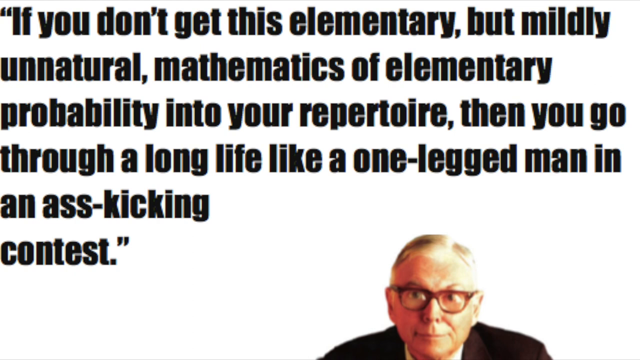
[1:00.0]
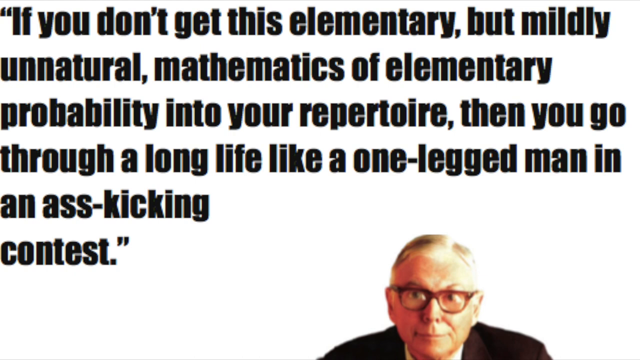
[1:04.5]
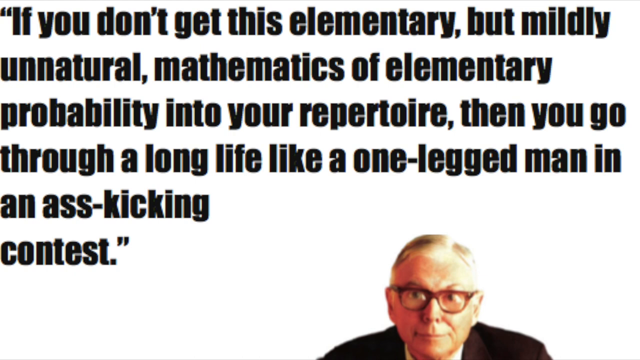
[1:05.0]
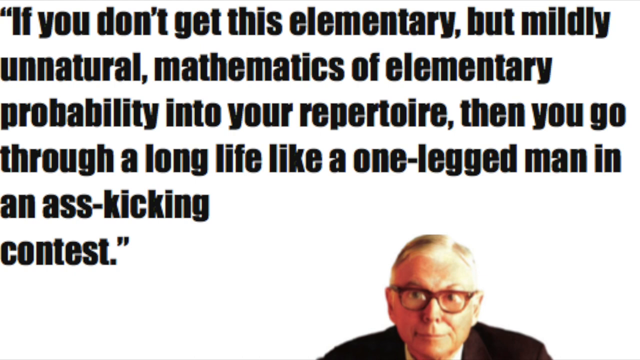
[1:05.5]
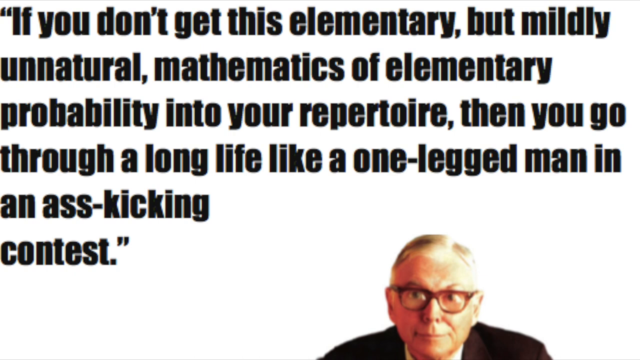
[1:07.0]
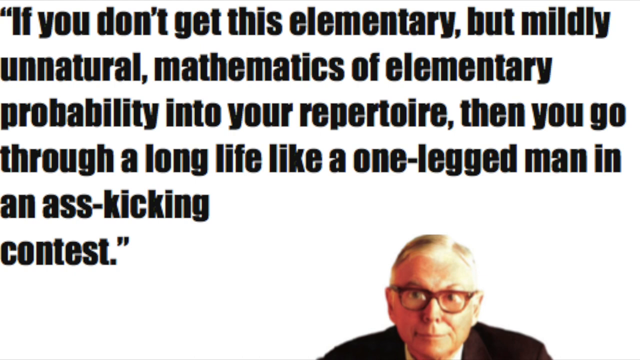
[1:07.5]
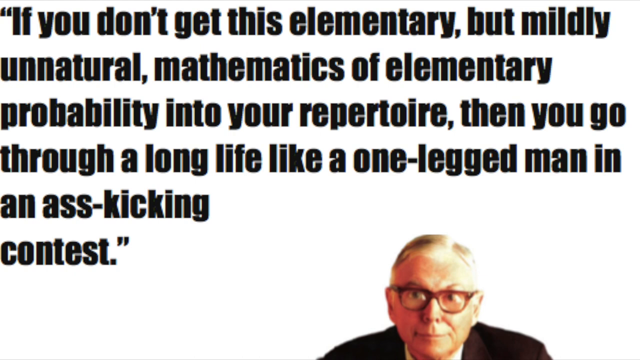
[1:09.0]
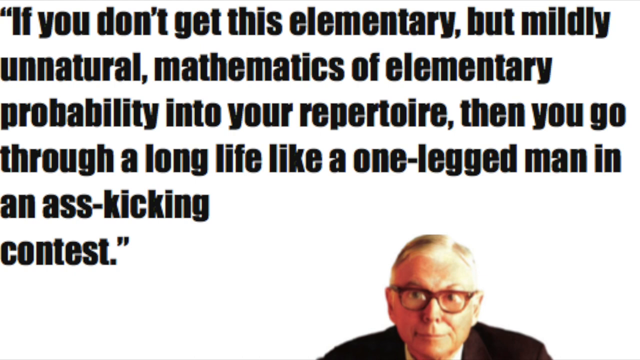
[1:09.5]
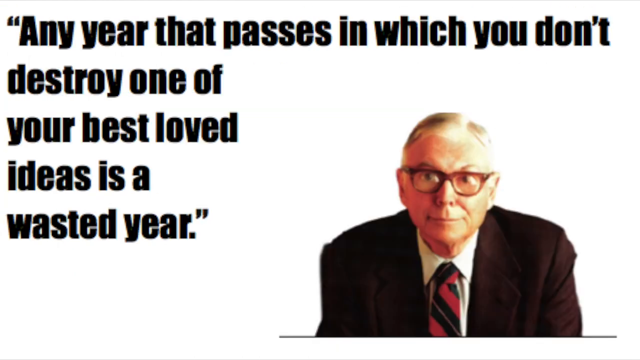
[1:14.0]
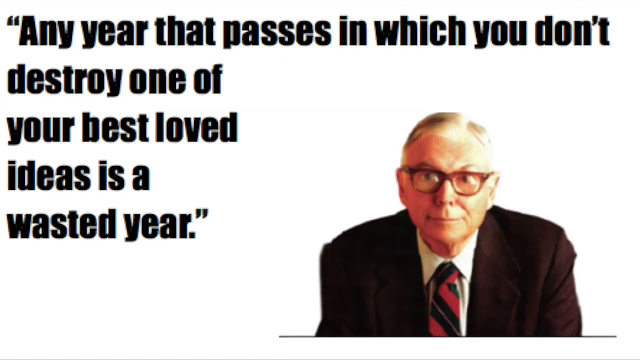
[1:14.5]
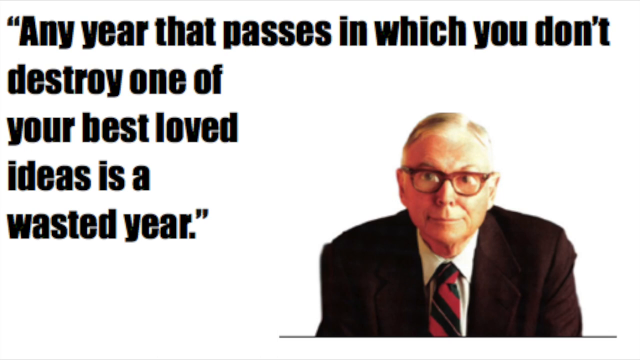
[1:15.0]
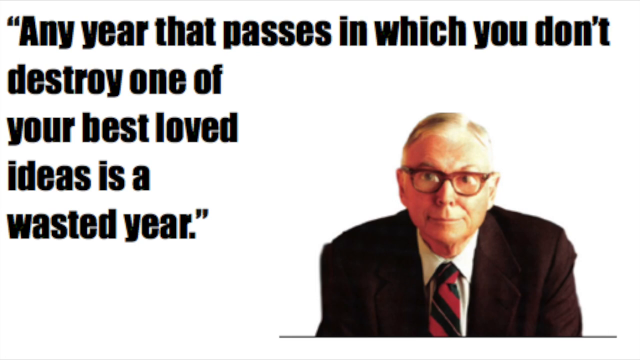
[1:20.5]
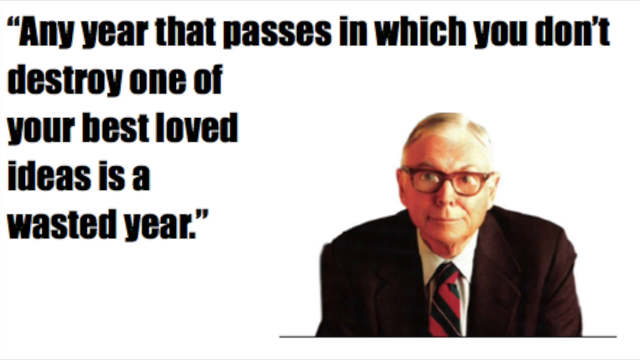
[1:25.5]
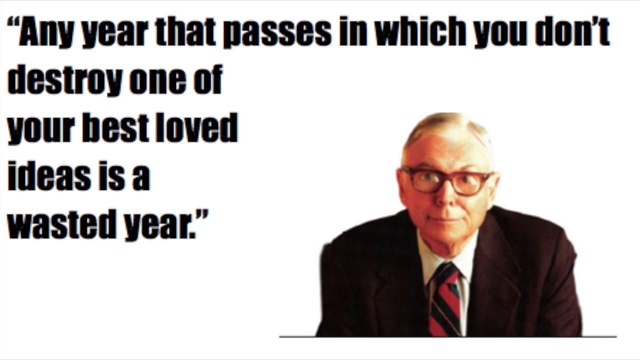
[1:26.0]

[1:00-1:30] The man is still at the bottom, with only his traps and his head poking up from the bottom, just a little in from the right corner. For about the first ten seconds, the same quote stays on screen in big bold blocky letters, four lines across all the way from left to right, then a three-word line and a one-word line: "if you don't get this elementary, but mildly unnatural mathematics of elementary probability into your repertoire then you go through a long life like a one-legged man in an ass-kicking contest." The video then moves to the next quote. The man is back up as before, with his tie and shirt visible and his head at about the center point, shifted over to the right. One line of text runs across, with four short lines underneath: "any year that passes in which you don't destroy one of your best loved ideas is a wasted year."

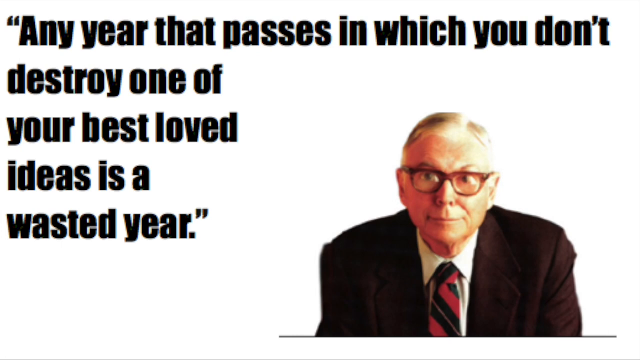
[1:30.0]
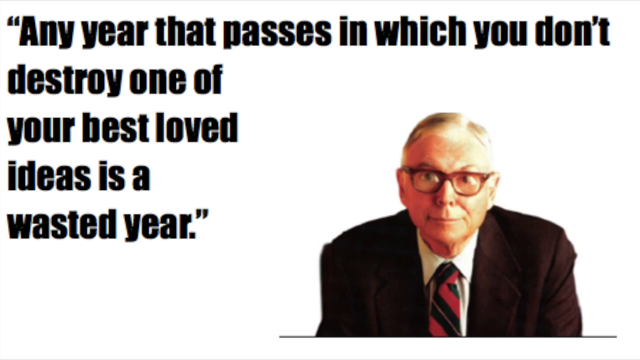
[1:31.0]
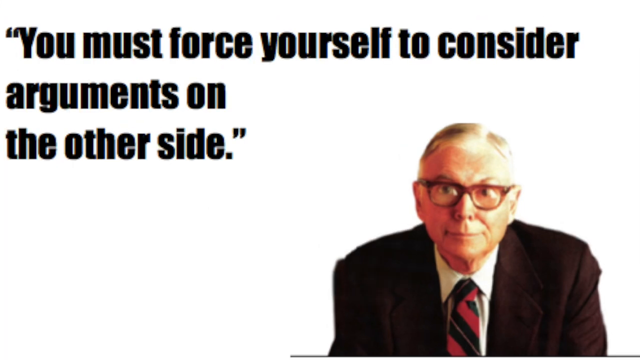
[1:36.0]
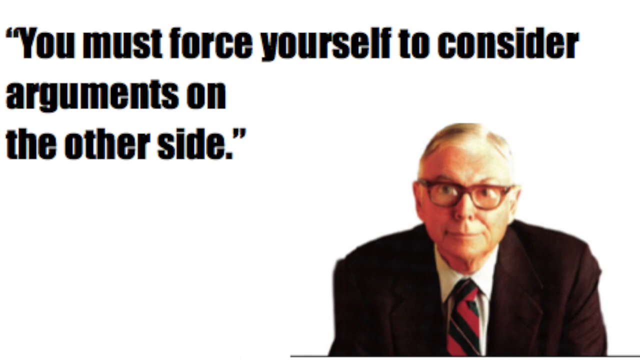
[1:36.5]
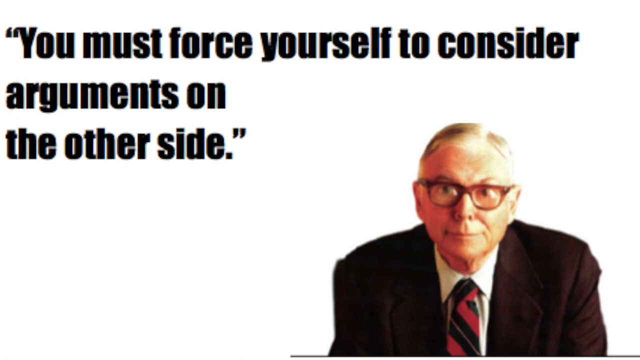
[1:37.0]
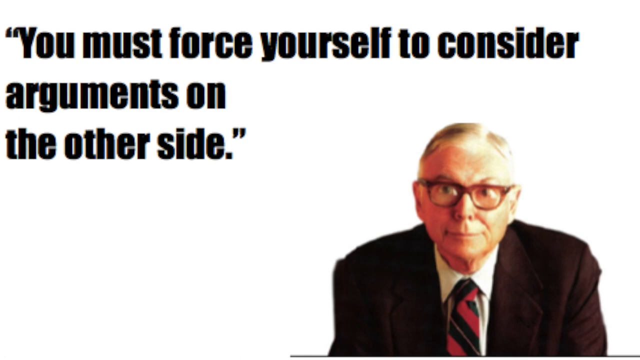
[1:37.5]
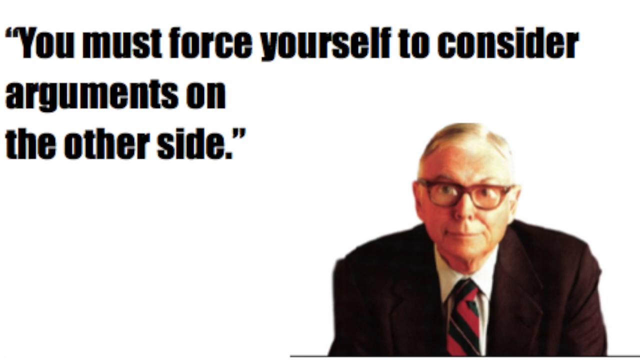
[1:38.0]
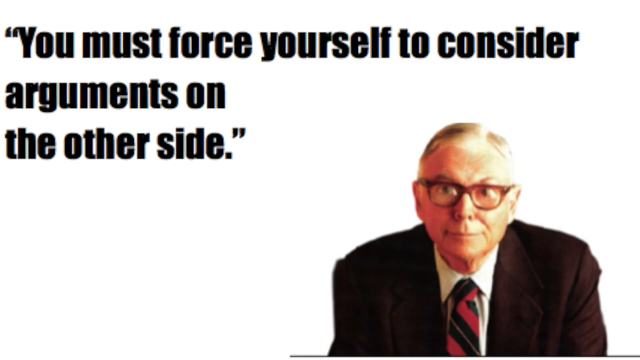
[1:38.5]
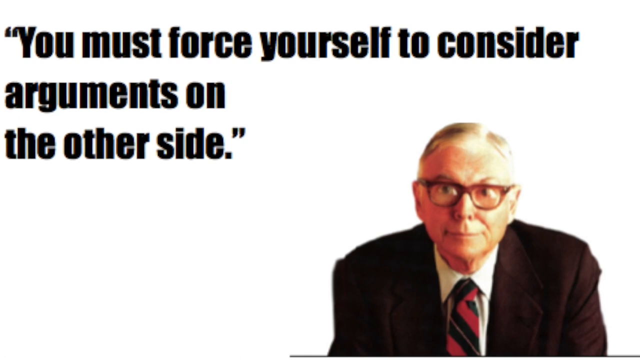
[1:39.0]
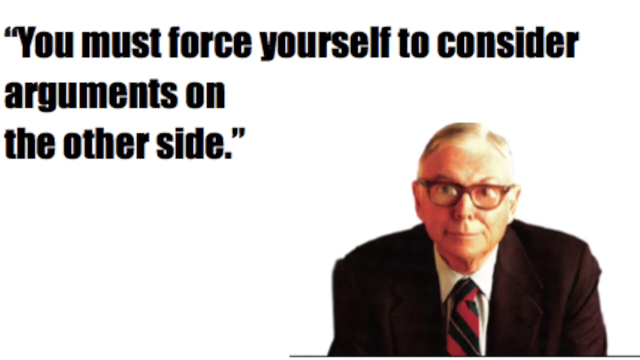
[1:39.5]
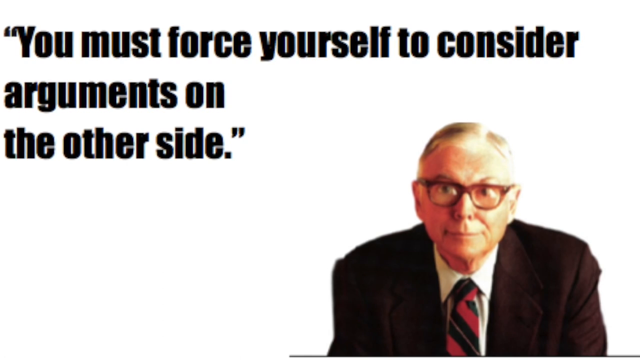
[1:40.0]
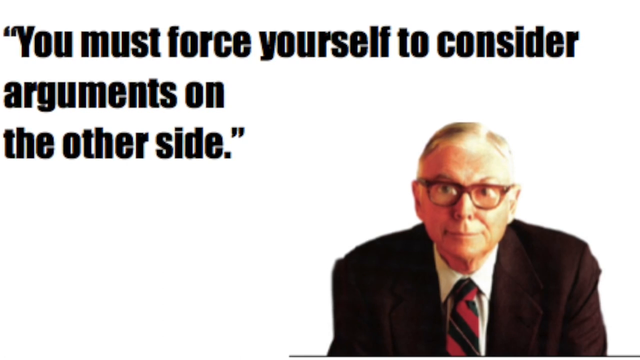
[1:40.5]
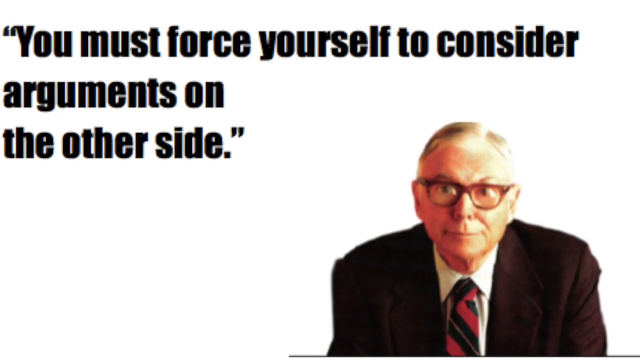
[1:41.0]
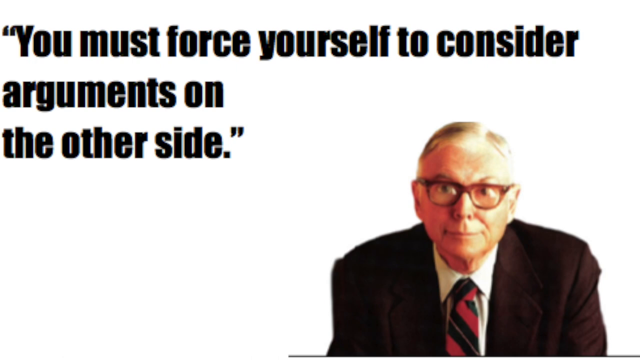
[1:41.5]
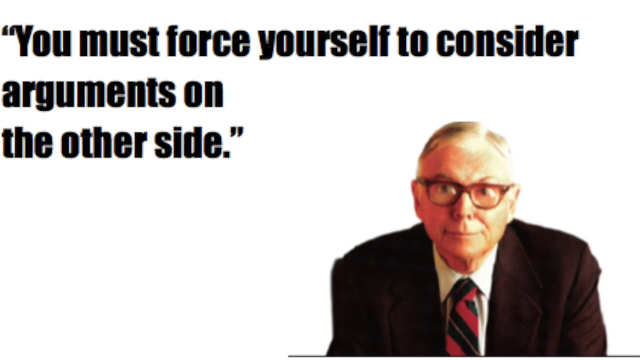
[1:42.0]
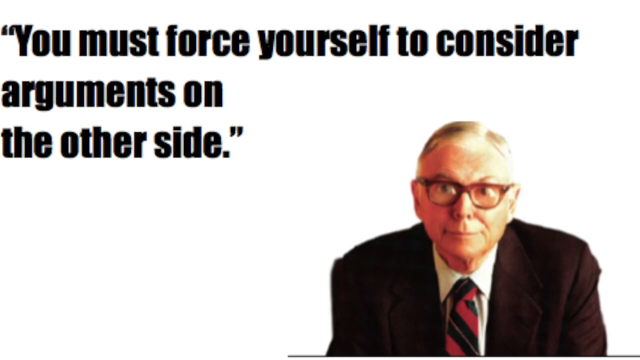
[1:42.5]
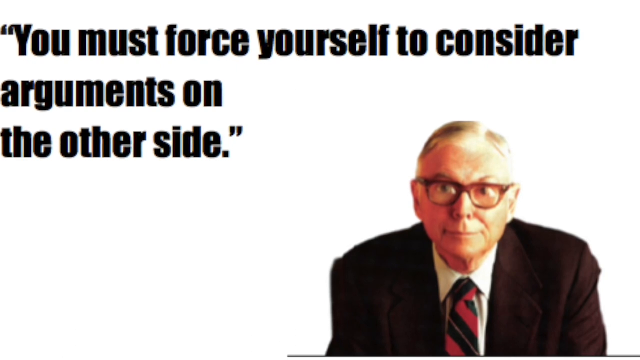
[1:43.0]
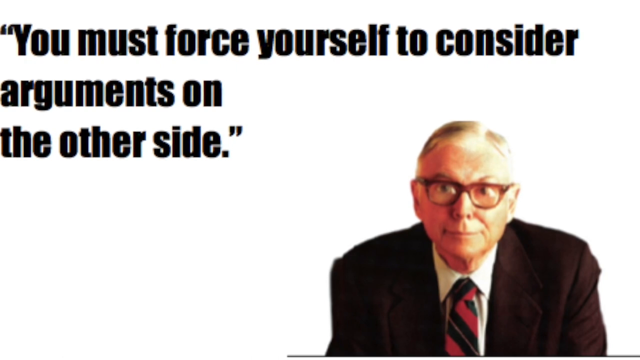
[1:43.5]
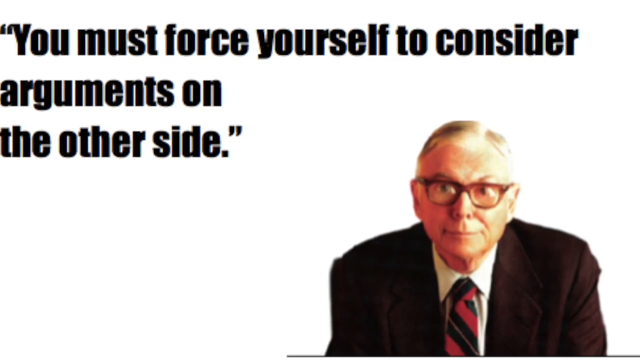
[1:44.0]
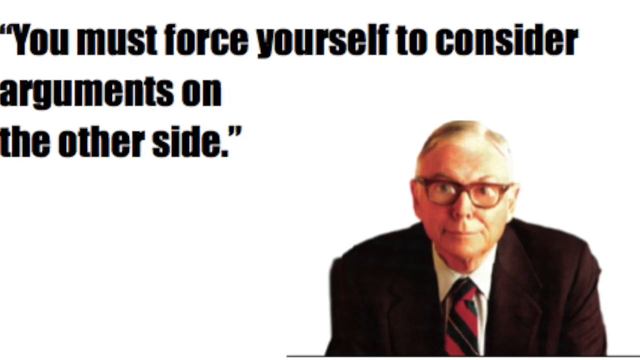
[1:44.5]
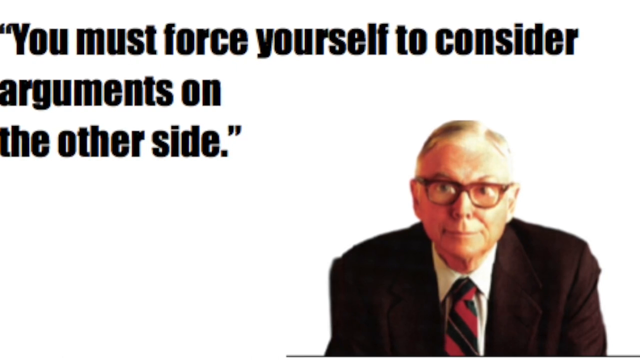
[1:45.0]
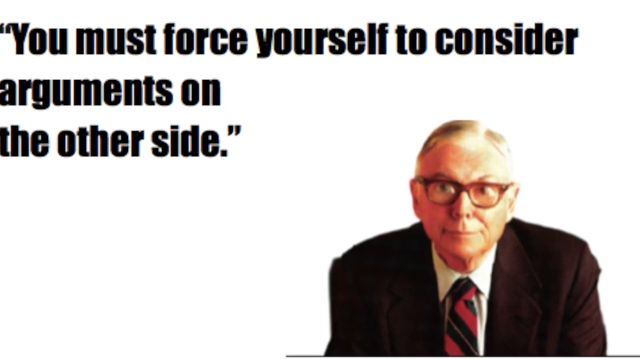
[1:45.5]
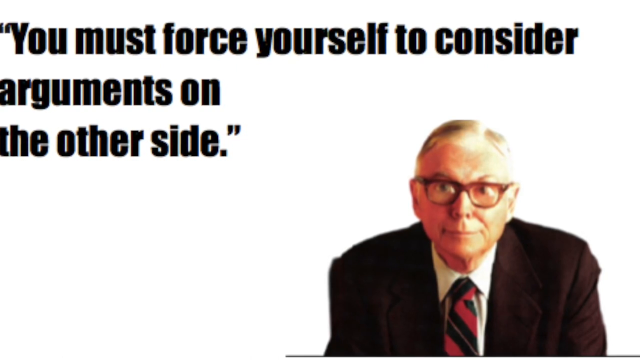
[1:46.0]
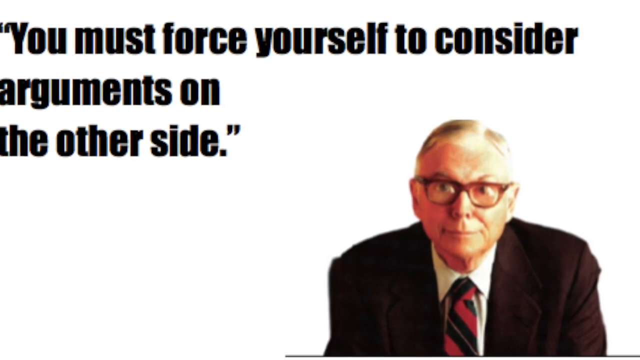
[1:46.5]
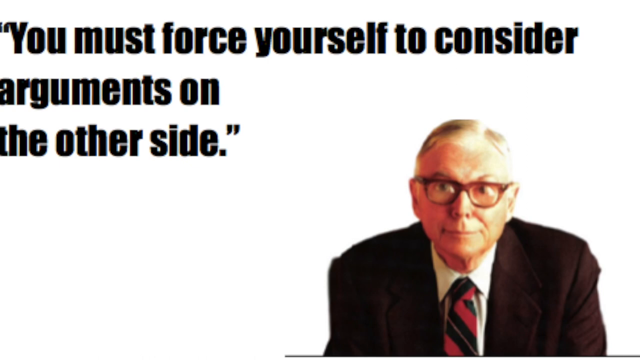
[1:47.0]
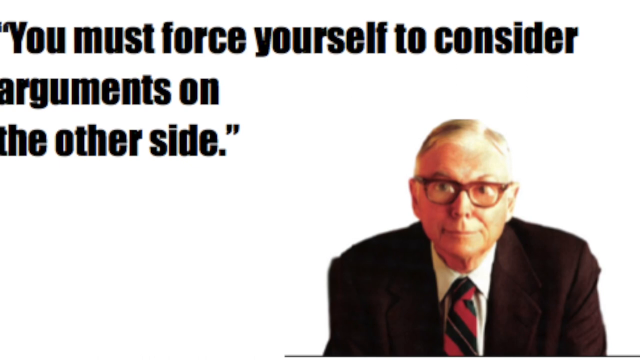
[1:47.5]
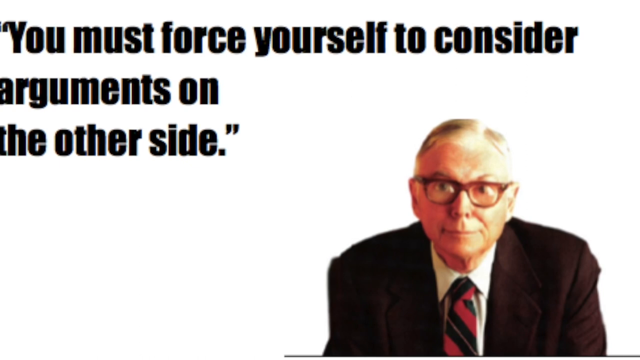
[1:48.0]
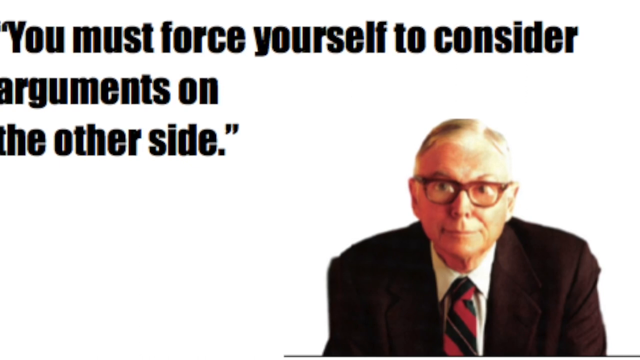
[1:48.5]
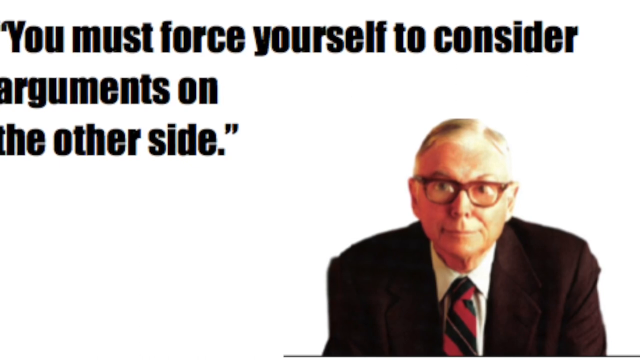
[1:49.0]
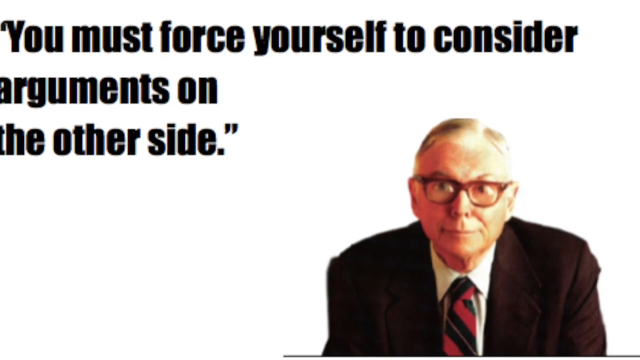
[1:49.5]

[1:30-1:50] The same quote remains. The man is just in from the right edge, about an inch, and his eyes are apparently about center vertically. His hair is parted on the right side above his eye, short and a little combed over on the left side. His eyebrows are raised, he wears red glasses, his face is clean shaven, and he leans a little forward, kind of pursing his lips. He wears a white shirt, a red and black tie and a brown sports coat, and his arms go off the bottom of the frame, which cuts just below his chest and biceps. Big, bold, blocky black letters run across the top, one line across and four short lines down the left side: "any year that passes in which you don't destroy one of your best loved ideas is a wasted year." Then, with the man in the same position on the right side, a new quote appears in big, bold, blocky letters, one line crossing all the way from left to right and two smaller lines underneath: "you must force yourself to consider arguments on the other side," as the view slowly moves in toward him just a little.